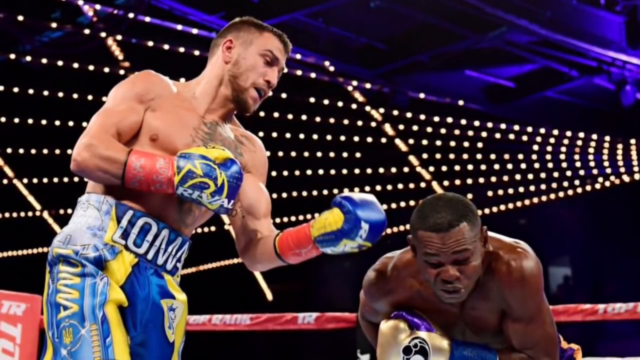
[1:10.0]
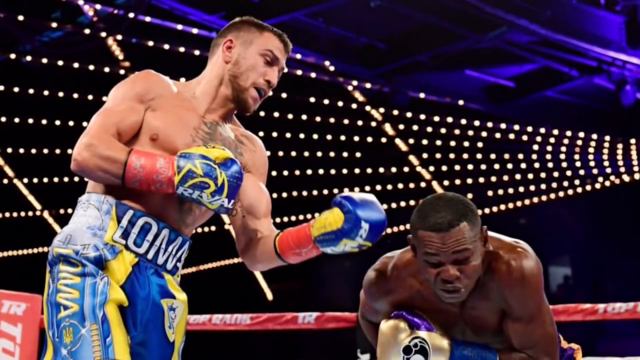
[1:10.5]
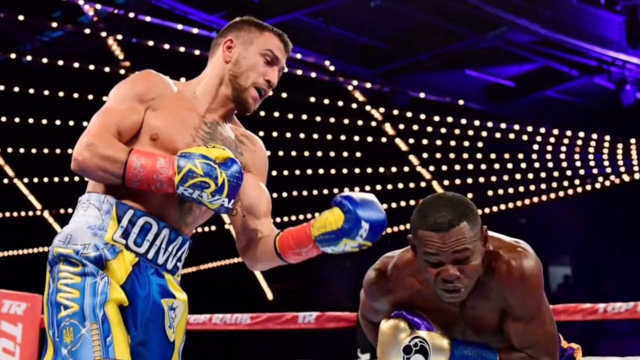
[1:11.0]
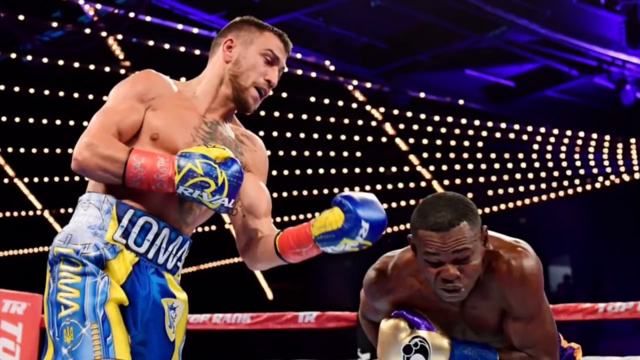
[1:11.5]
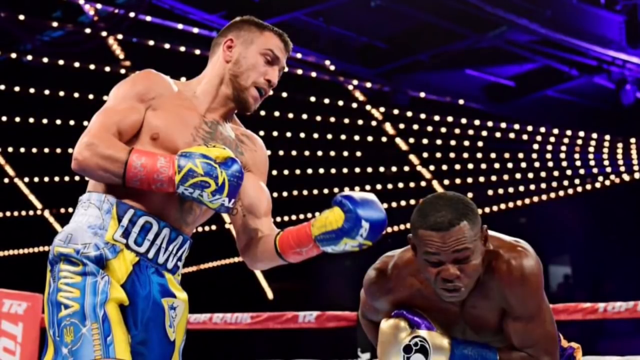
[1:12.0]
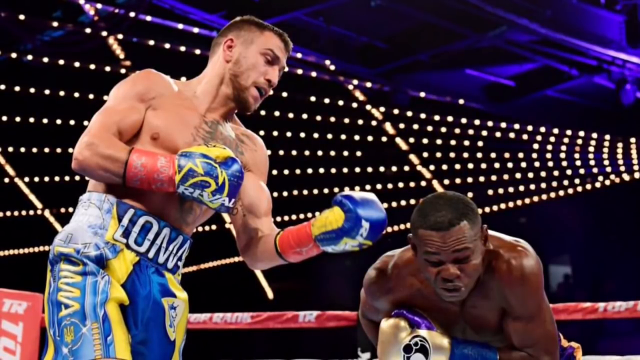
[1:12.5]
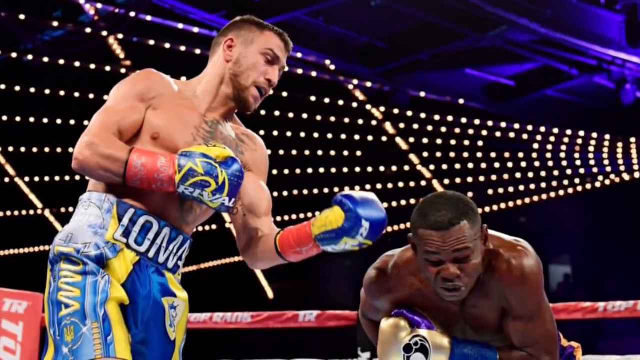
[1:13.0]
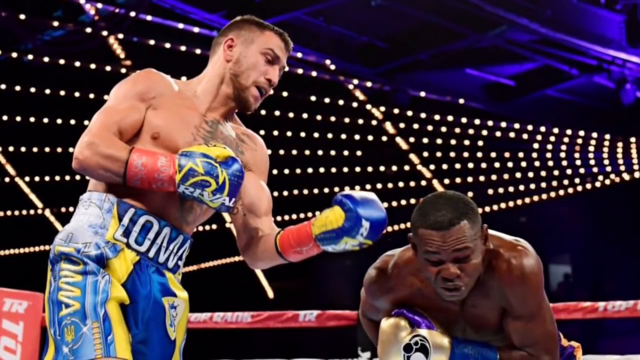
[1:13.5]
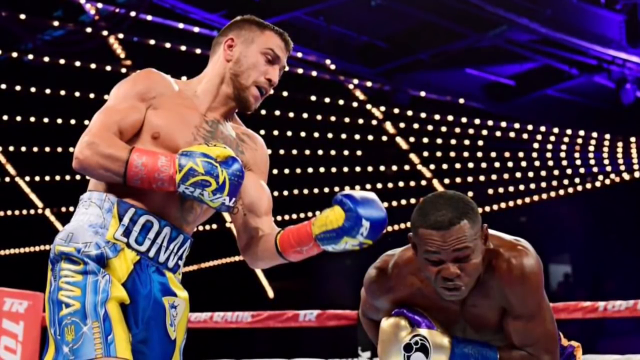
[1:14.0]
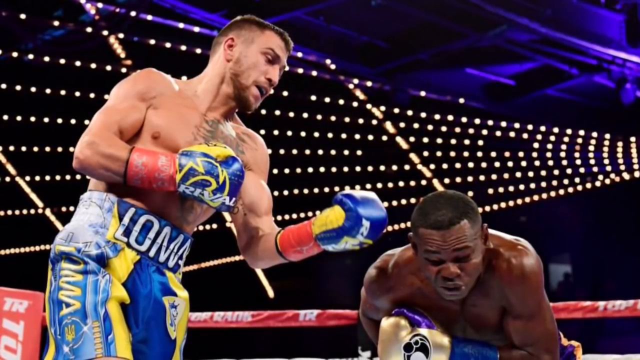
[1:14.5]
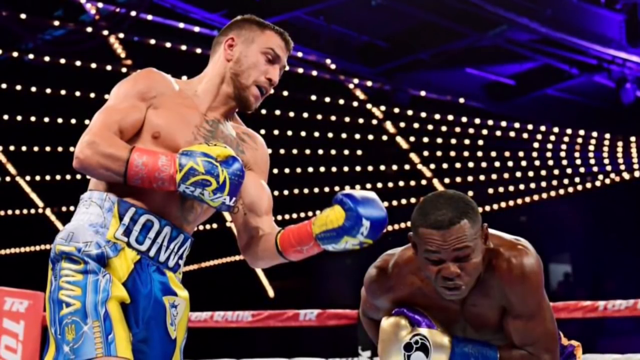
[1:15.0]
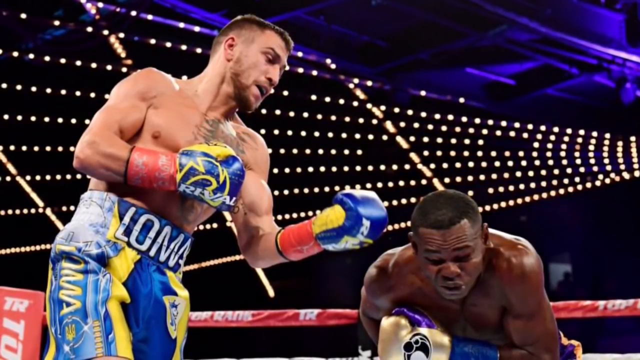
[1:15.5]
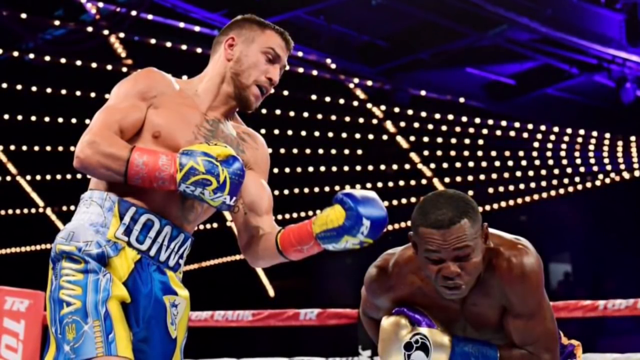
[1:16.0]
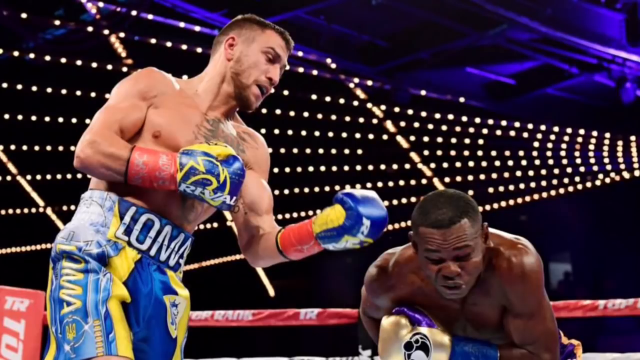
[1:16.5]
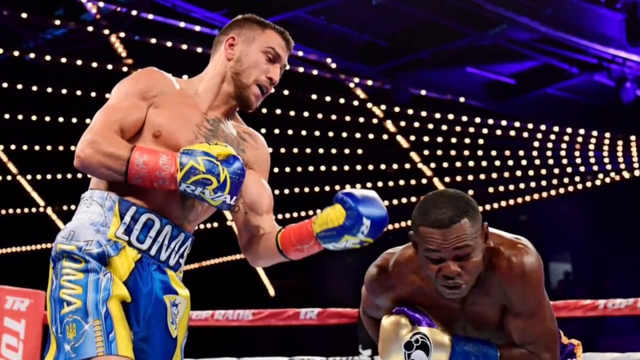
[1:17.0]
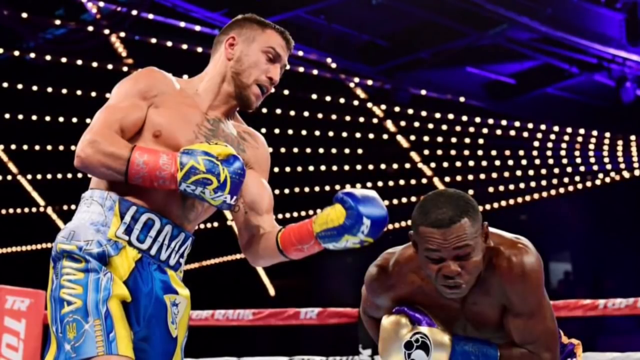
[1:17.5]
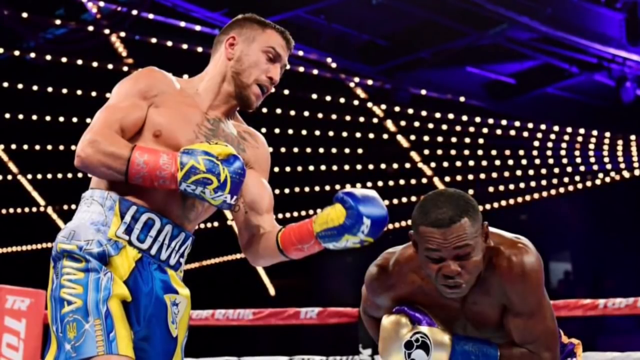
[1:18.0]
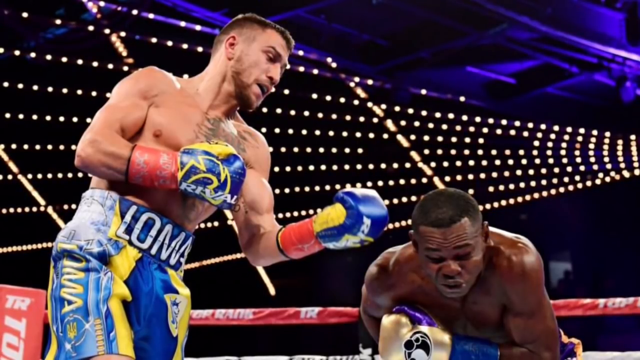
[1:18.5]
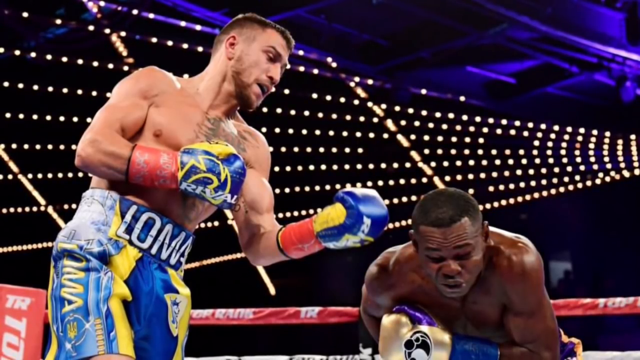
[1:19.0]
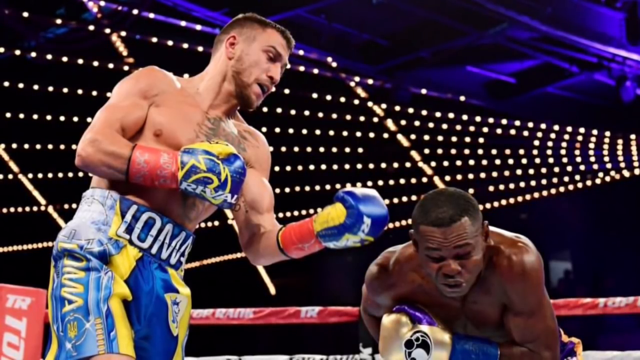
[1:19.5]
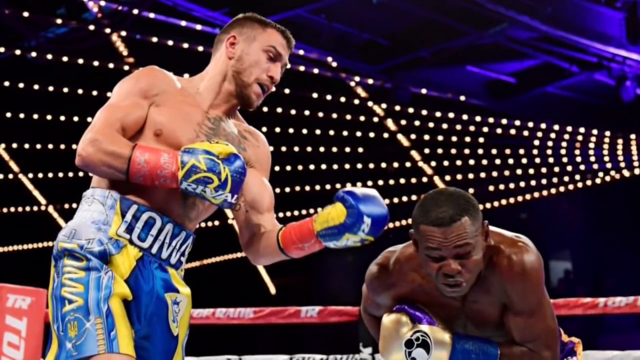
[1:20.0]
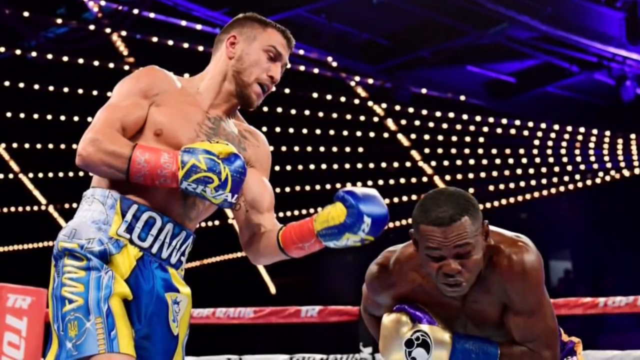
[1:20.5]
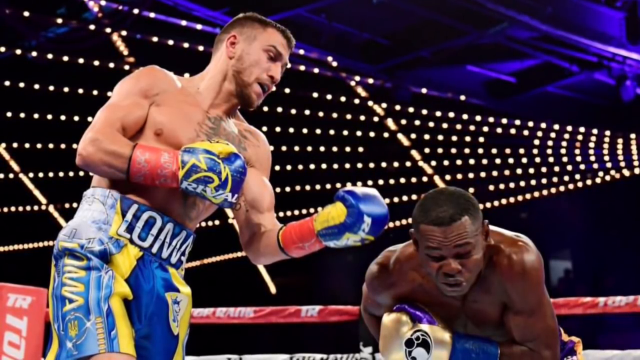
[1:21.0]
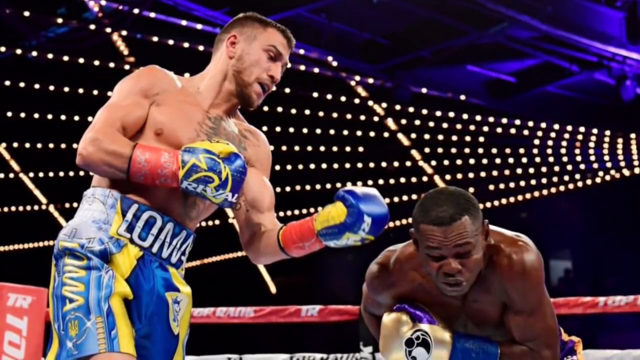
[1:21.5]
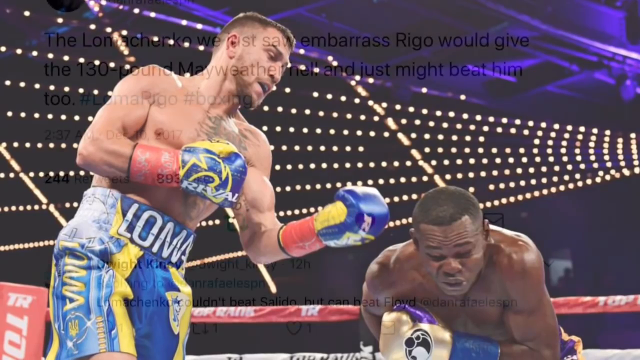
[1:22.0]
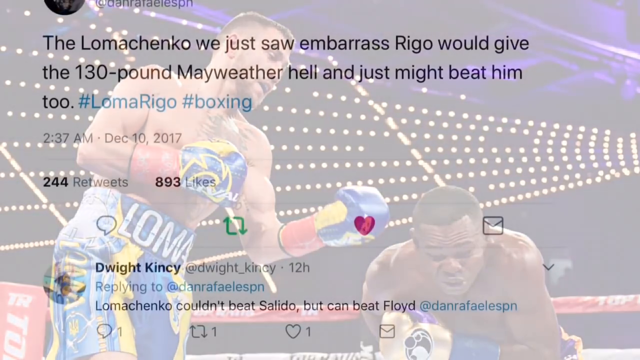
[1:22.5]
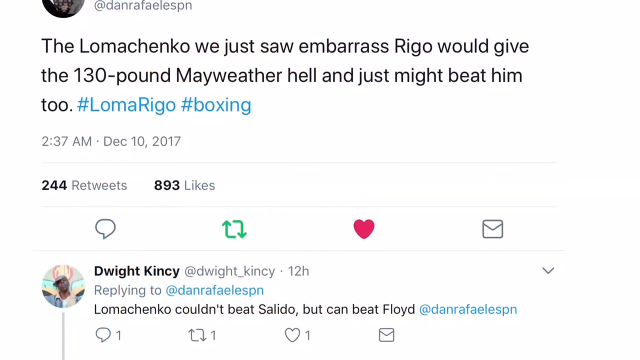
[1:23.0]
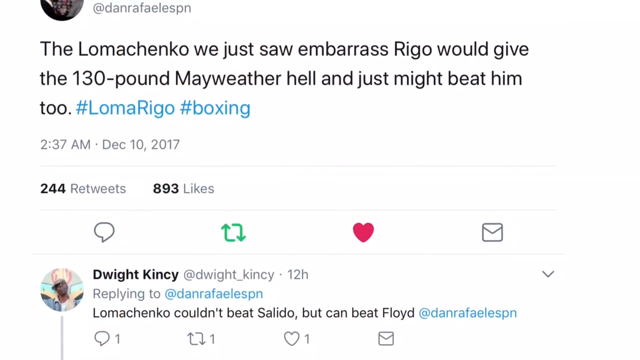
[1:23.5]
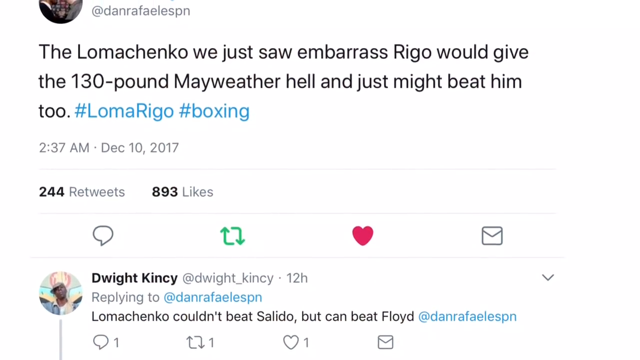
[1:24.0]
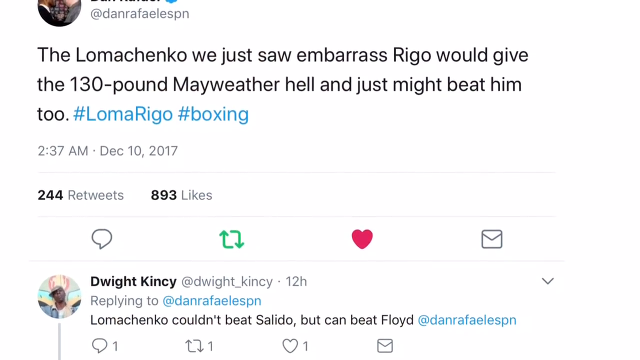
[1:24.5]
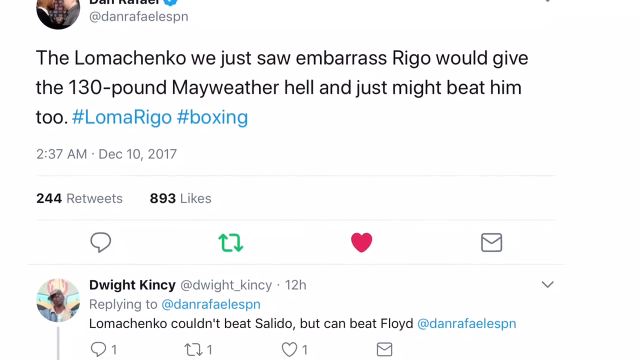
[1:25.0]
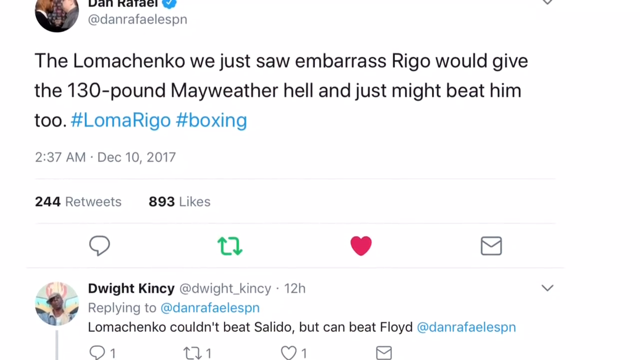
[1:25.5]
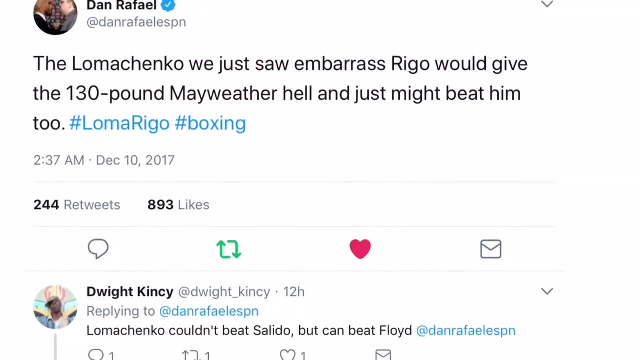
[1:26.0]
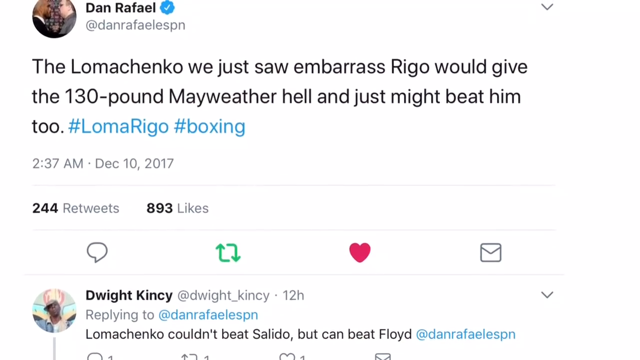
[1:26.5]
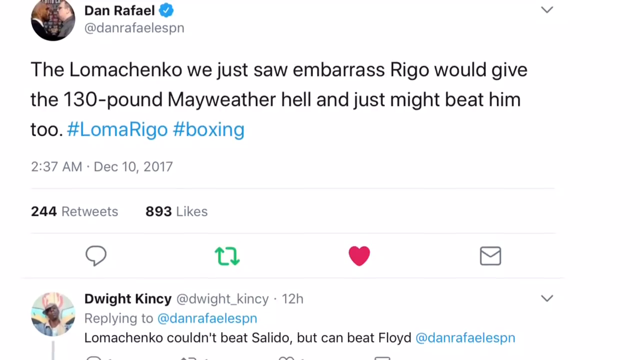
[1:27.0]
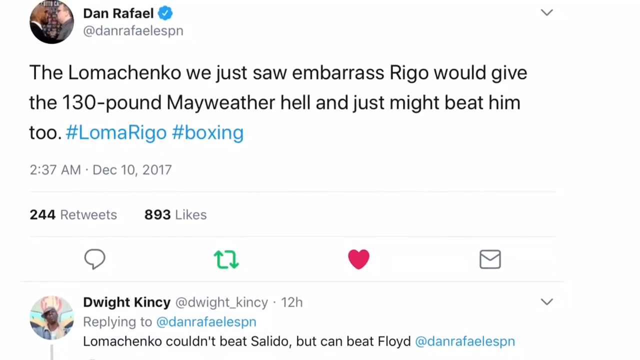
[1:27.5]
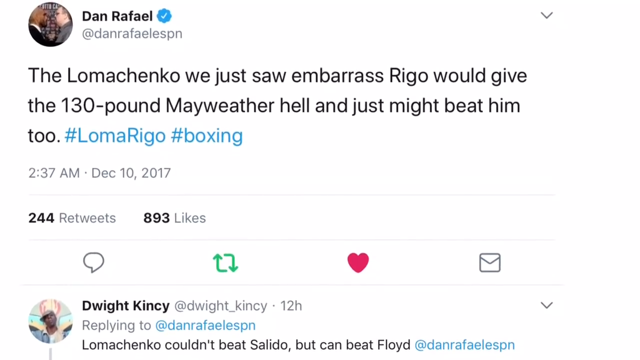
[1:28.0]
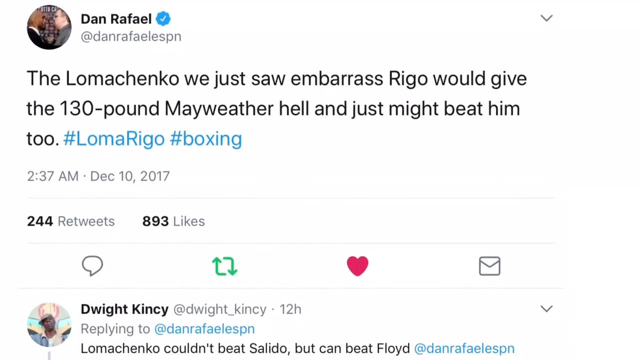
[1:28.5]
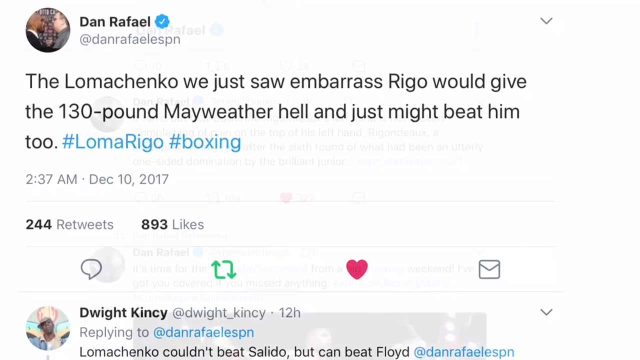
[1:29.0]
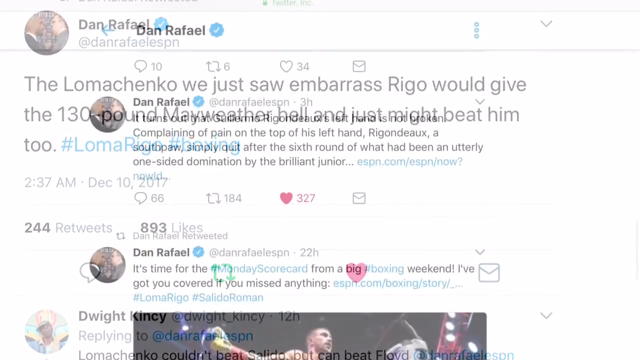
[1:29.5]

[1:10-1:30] The image remains on screen. The man on the left has well-defined muscles, big biceps and little body fat. The man on the right is also very muscular, with very large shoulders, and as he leans over, the light reflects off his back, creating a white outline. The shorts of the man on the left have a yellow wavy line running down the left-hand side. Text then appears as Dan Raphael's Twitter page is shown again, with another tweet: "the Lomachenko we just saw embarrass Rego would give the 130 pound Mayweather hell and just might beat him too." It has 244 retweets and 893 likes. Underneath is a reply from Dwight Kinsey: "Lomachenko couldn't beat Salido, but can beat Floyd."